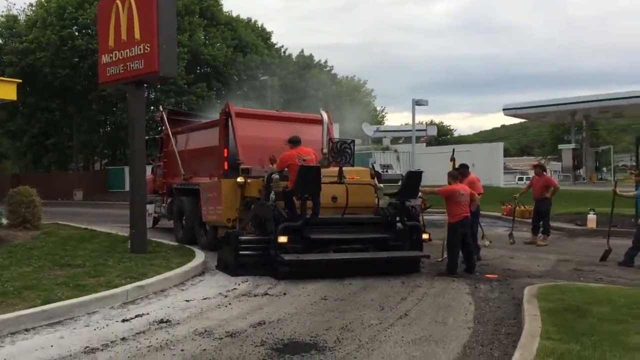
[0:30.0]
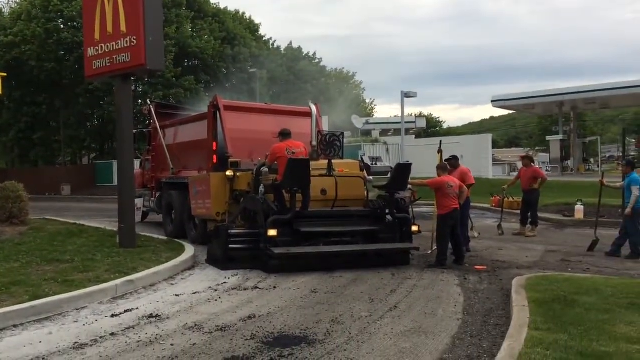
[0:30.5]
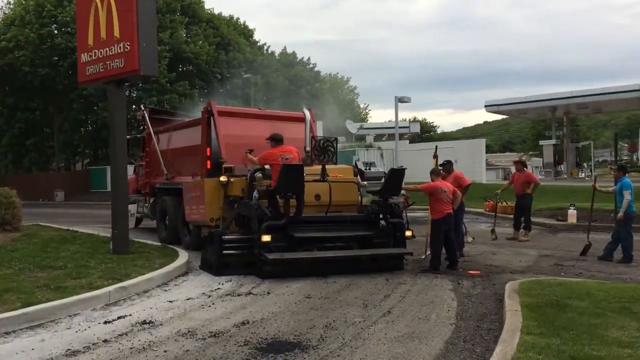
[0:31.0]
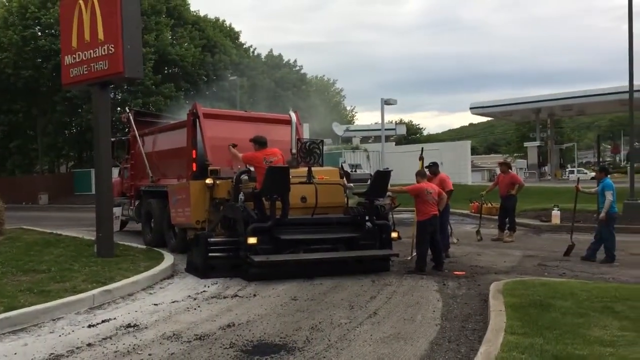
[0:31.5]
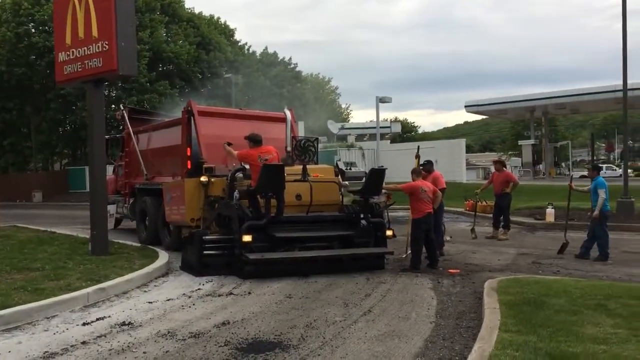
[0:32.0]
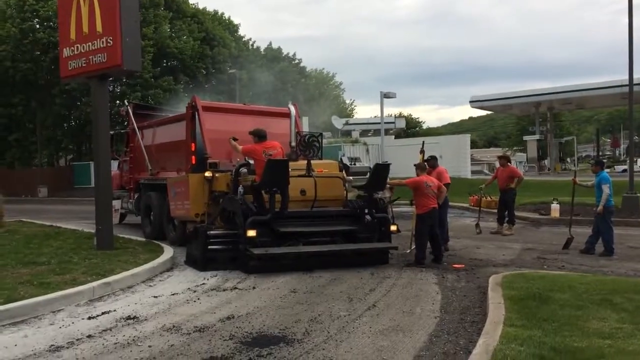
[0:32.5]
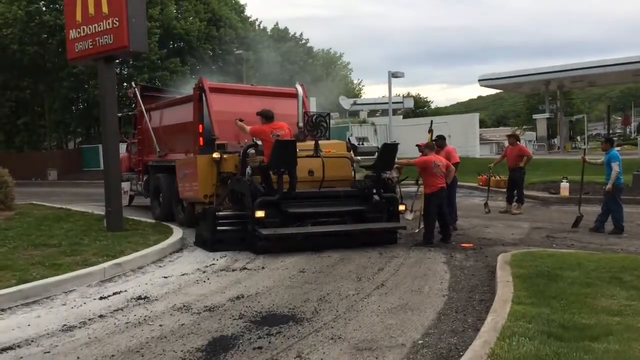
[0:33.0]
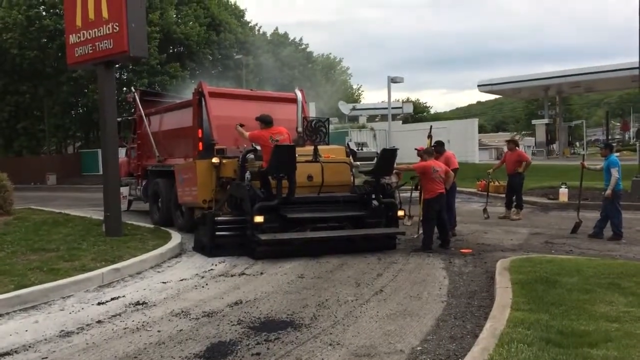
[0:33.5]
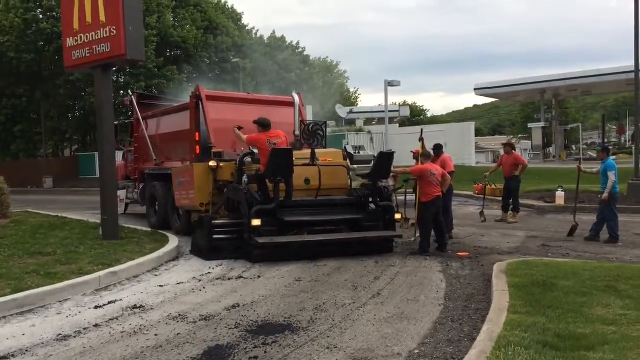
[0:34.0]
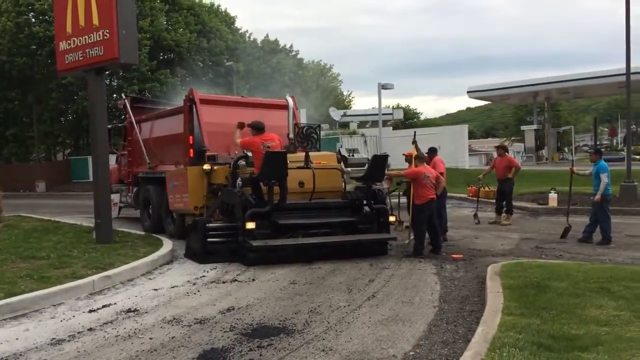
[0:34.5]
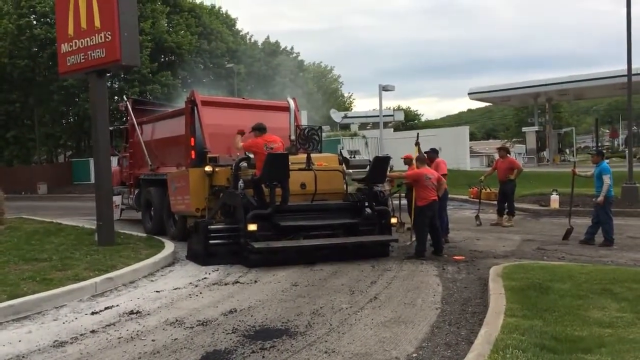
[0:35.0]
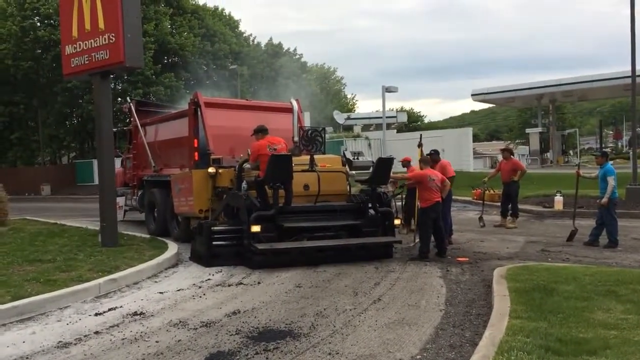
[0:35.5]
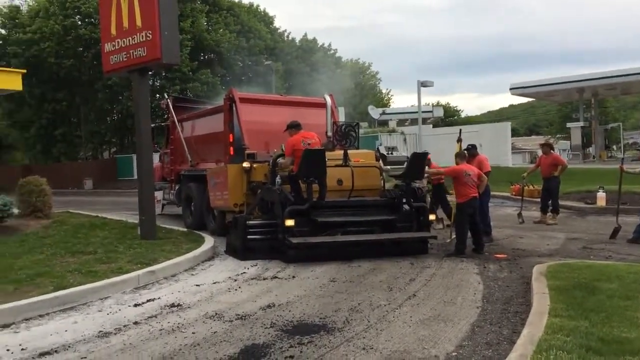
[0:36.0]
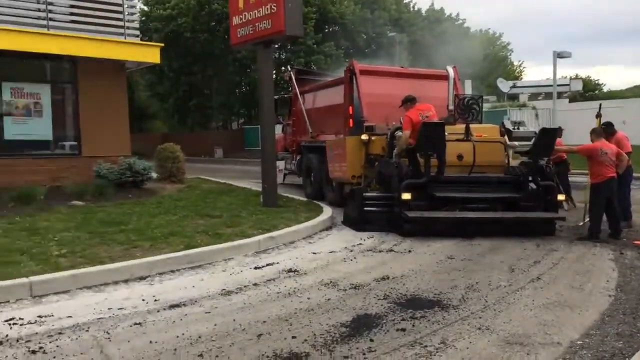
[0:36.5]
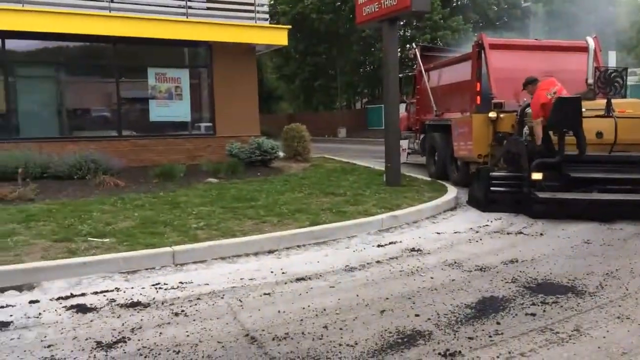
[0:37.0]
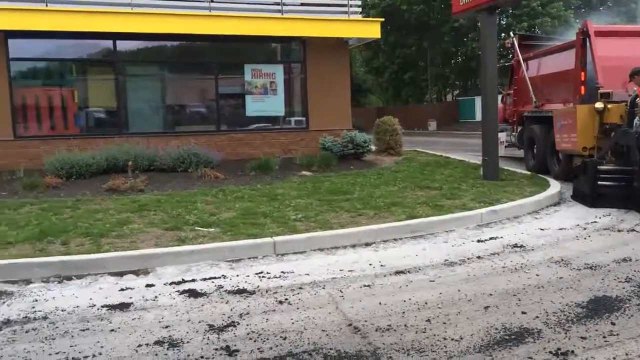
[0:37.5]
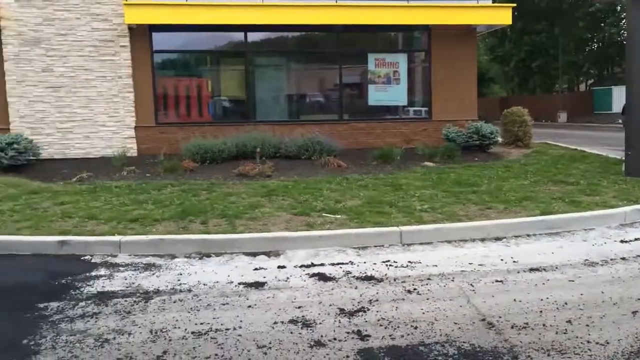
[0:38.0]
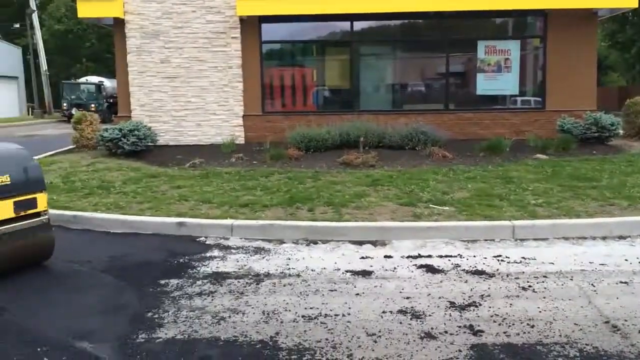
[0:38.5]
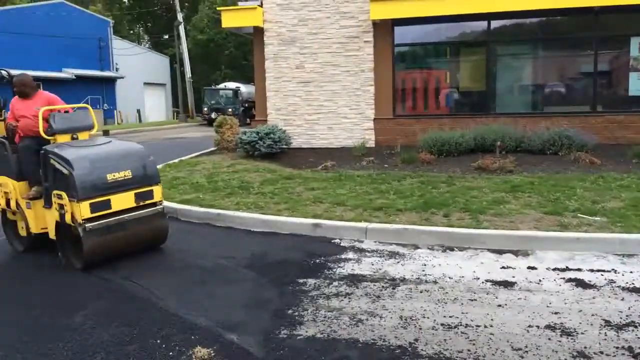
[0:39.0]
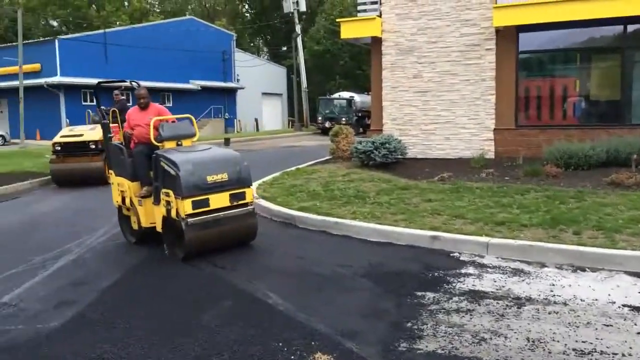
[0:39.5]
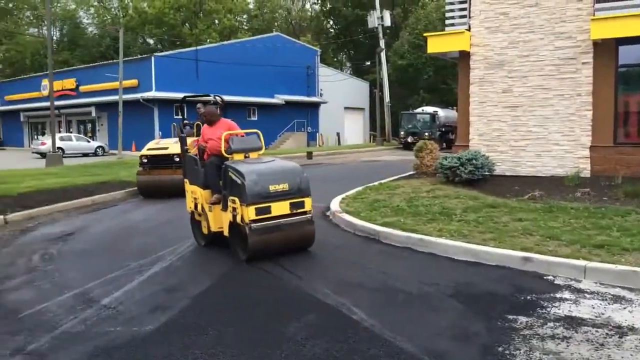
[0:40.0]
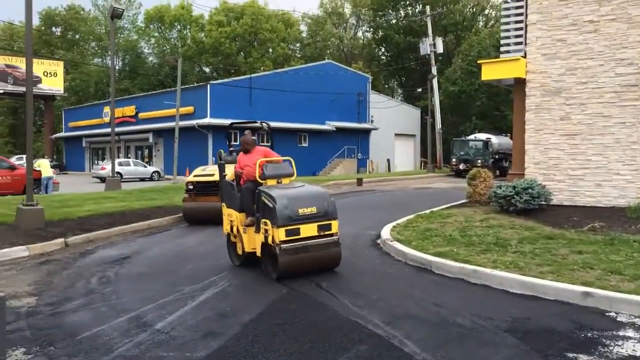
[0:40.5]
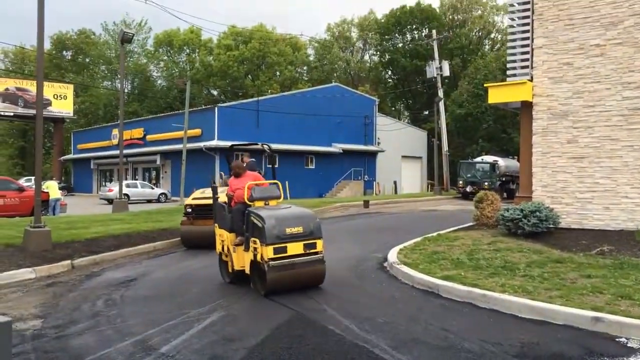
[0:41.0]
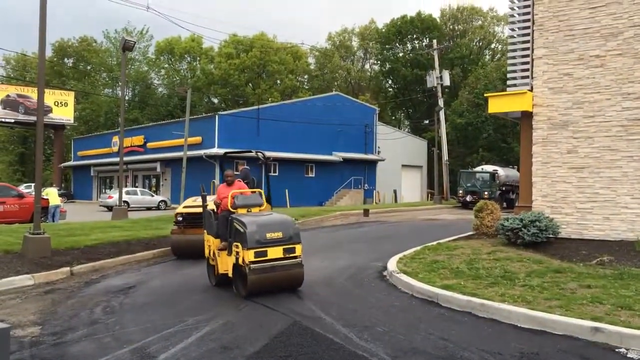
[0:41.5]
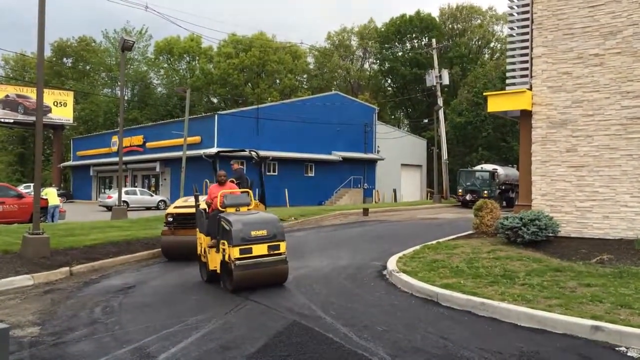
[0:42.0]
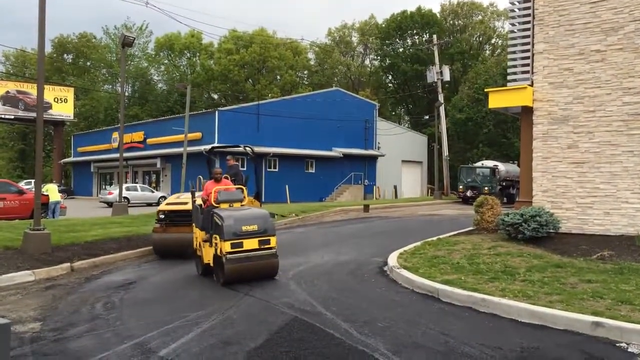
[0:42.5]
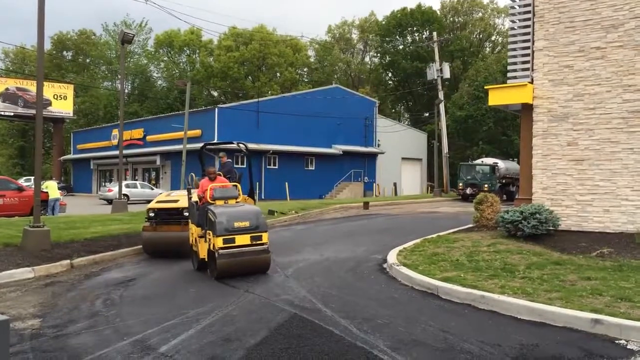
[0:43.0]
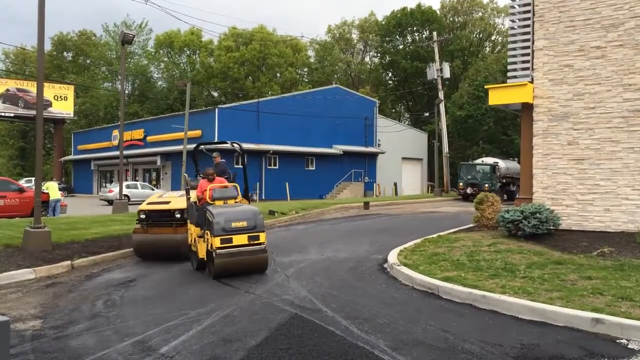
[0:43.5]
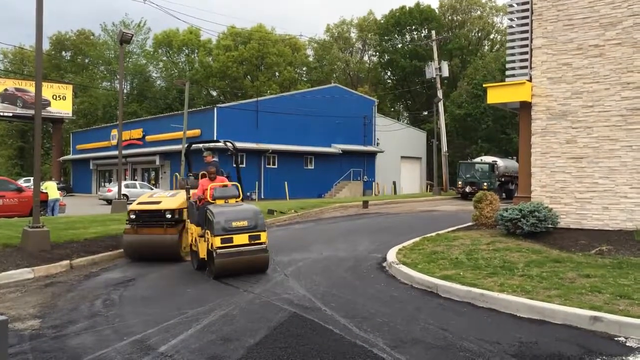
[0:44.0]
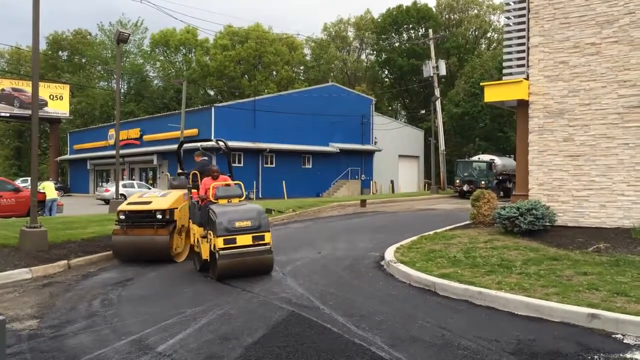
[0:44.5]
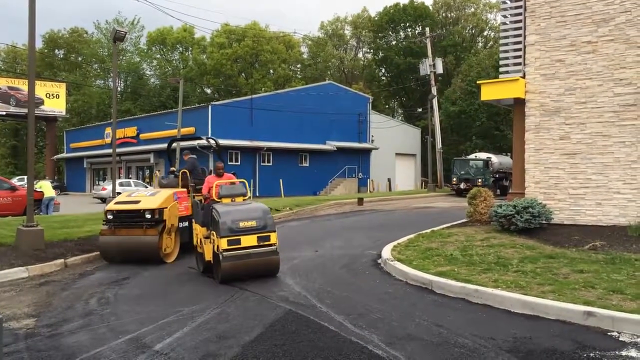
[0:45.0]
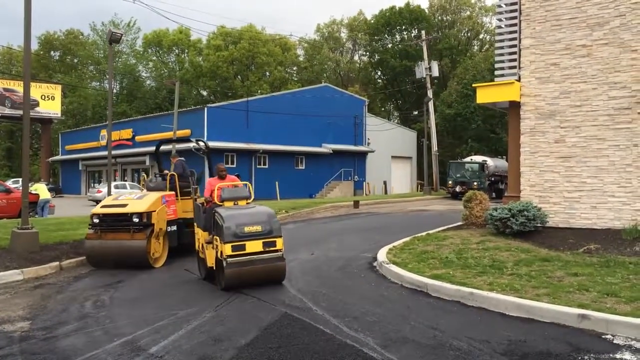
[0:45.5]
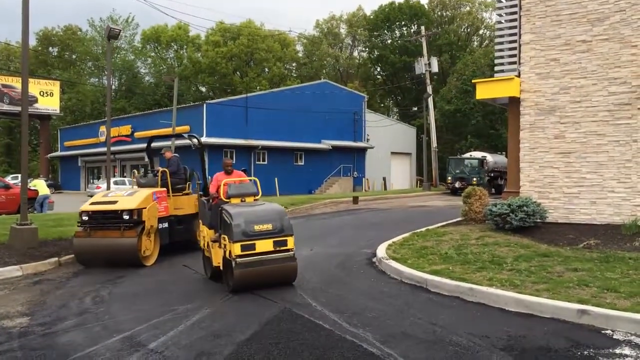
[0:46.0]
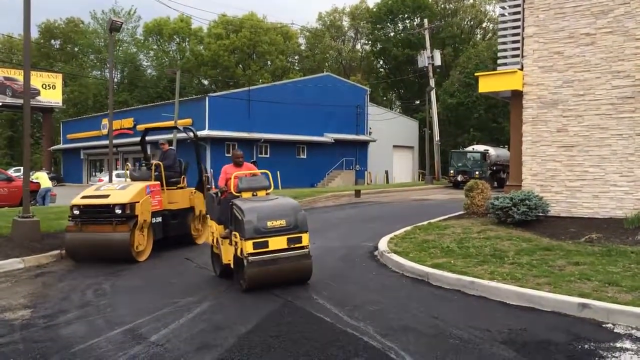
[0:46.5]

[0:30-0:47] The road paving continues around the McDonald's, possibly its drive-thru. Six men are paving the road with asphalt and seem to be making progress. The building is surrounded by a lot of greenery, with lots of trees and grass. The blue building is in the distance, along with a big banner showing a car. There are some parked cars, so this could be an industrial area. Wires run along poles on the left-hand side of the McDonald's, while the right-hand side seems to show a petrol station and a major road. About six workers appear to be in sight.